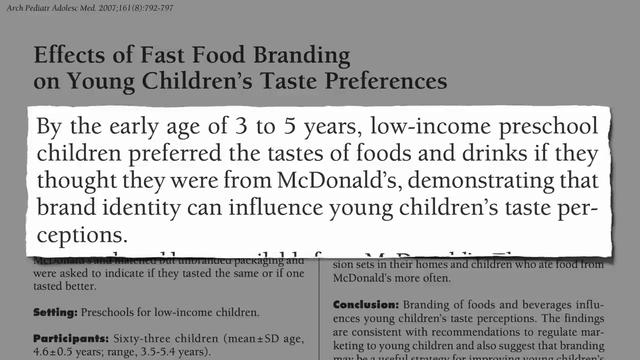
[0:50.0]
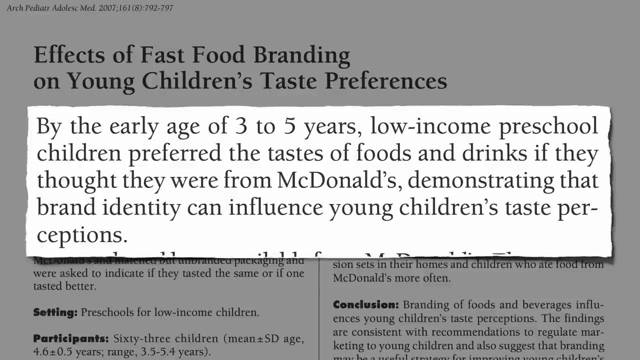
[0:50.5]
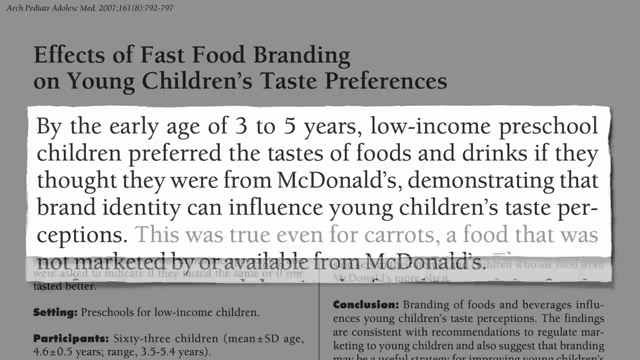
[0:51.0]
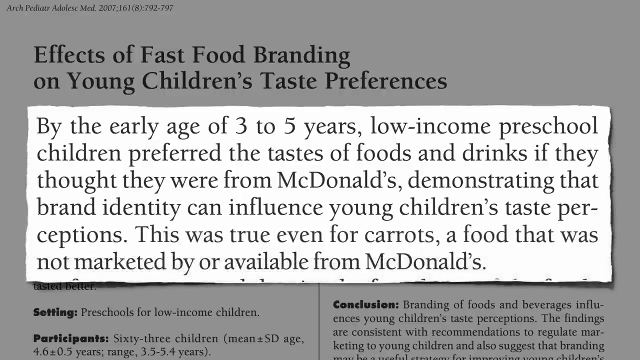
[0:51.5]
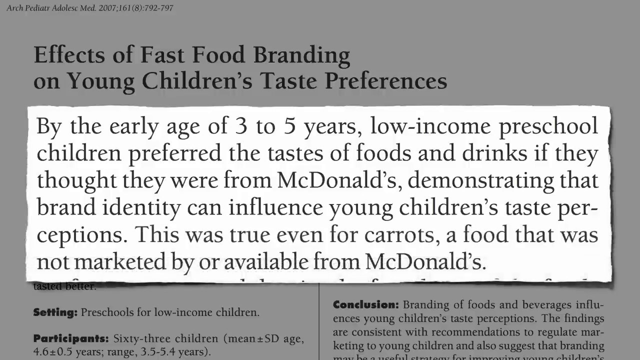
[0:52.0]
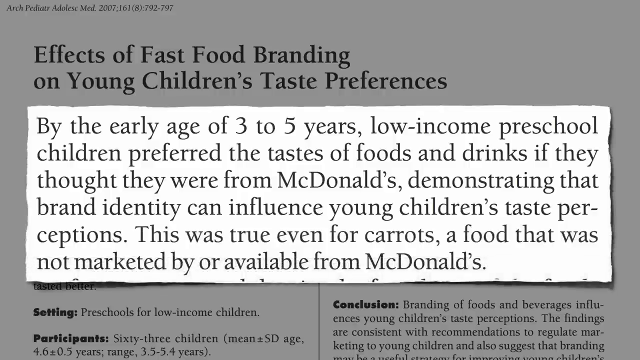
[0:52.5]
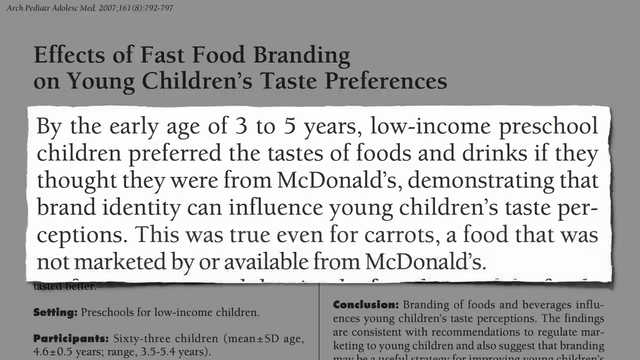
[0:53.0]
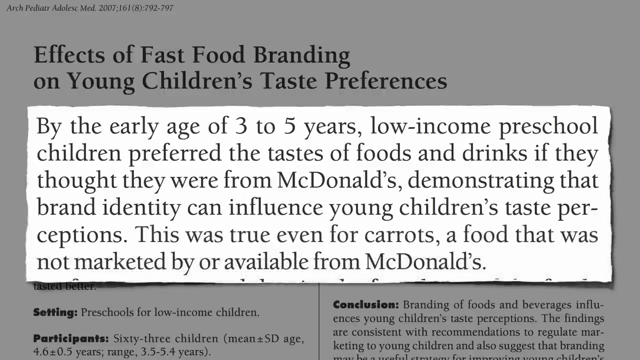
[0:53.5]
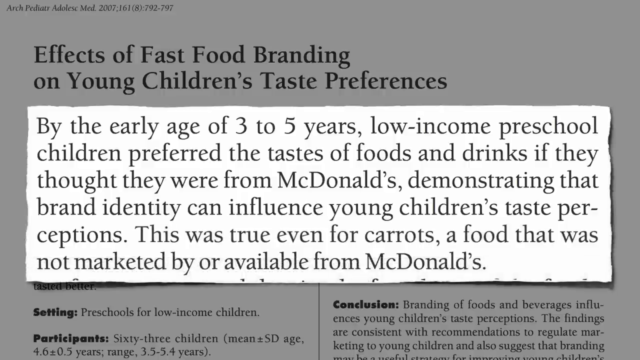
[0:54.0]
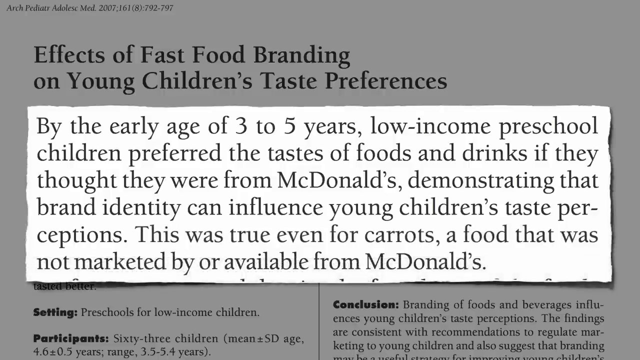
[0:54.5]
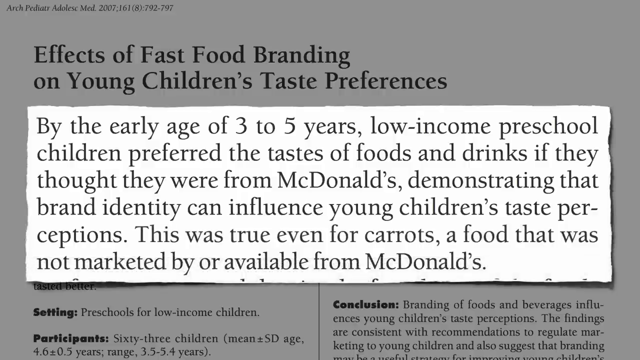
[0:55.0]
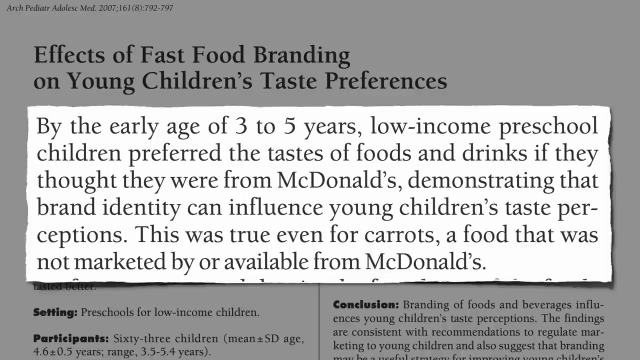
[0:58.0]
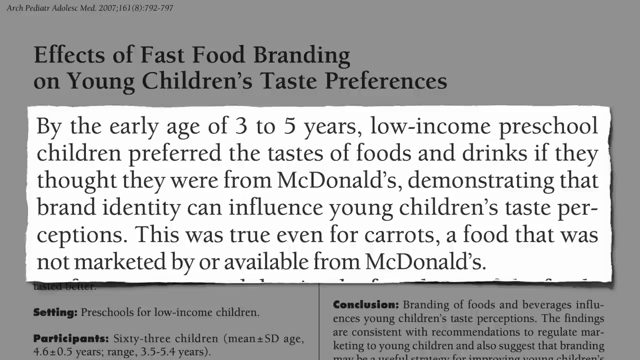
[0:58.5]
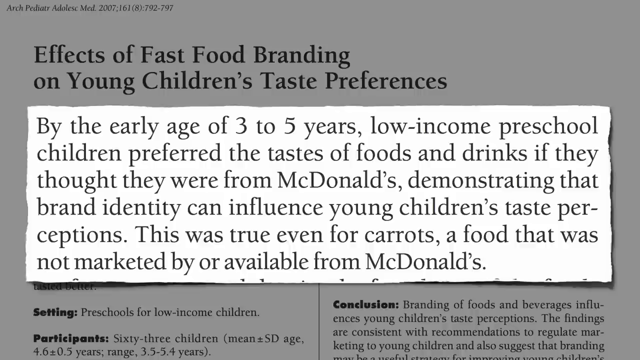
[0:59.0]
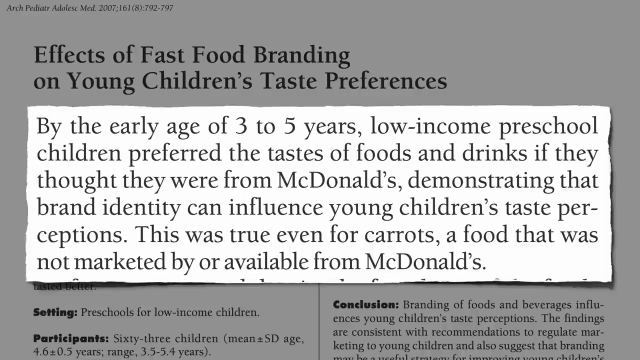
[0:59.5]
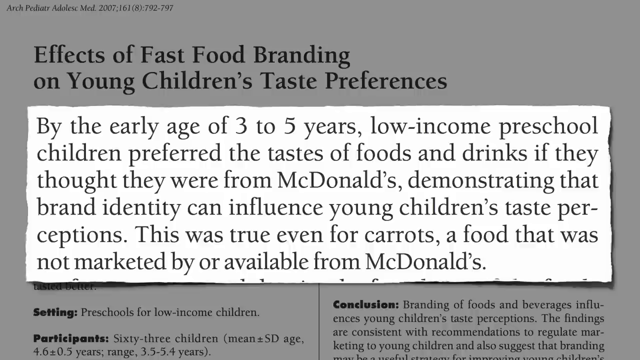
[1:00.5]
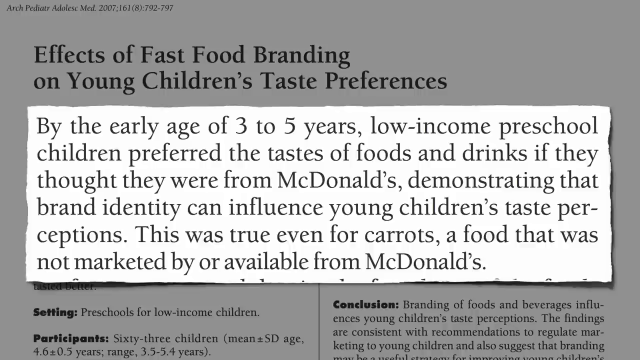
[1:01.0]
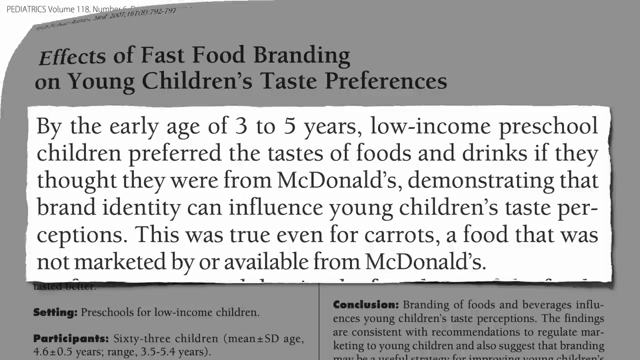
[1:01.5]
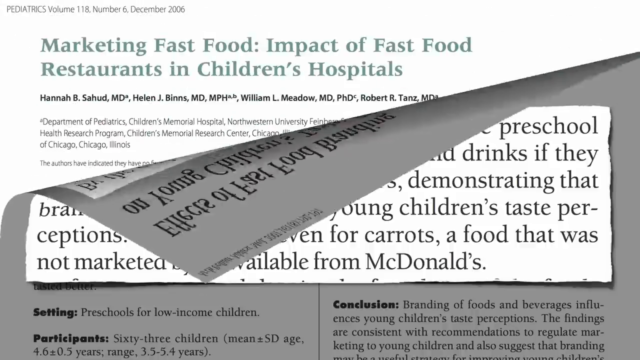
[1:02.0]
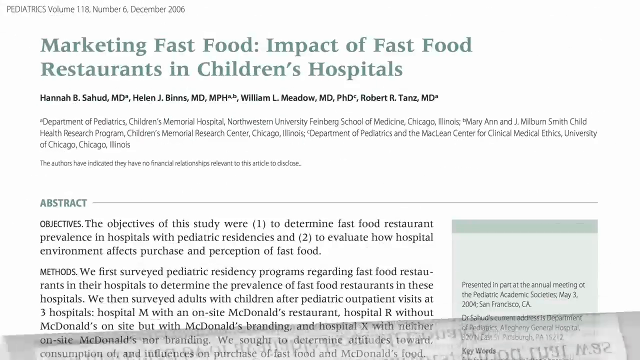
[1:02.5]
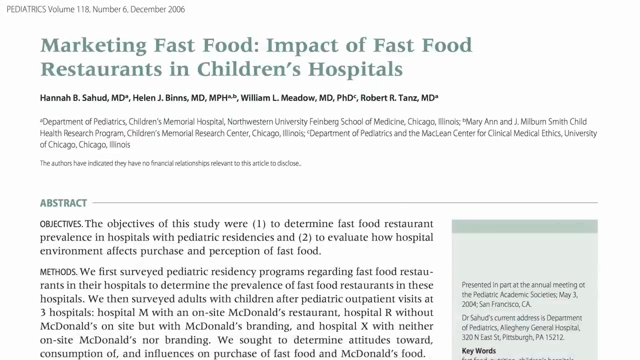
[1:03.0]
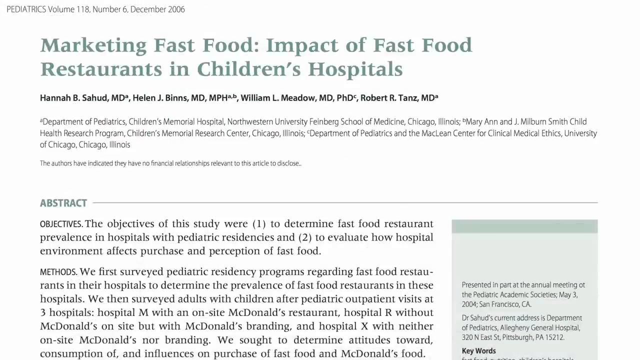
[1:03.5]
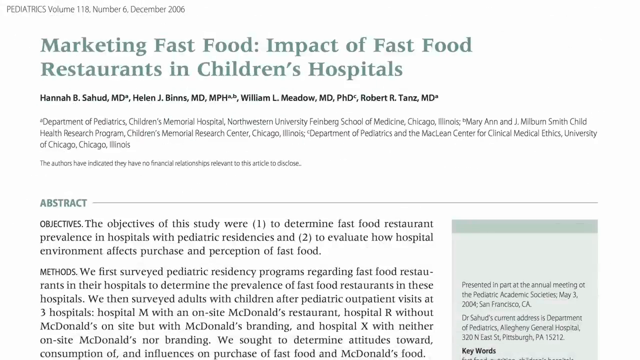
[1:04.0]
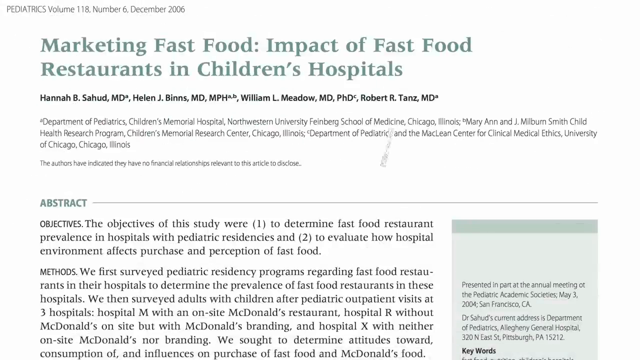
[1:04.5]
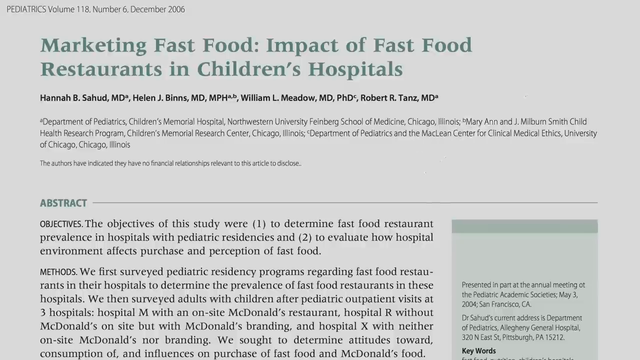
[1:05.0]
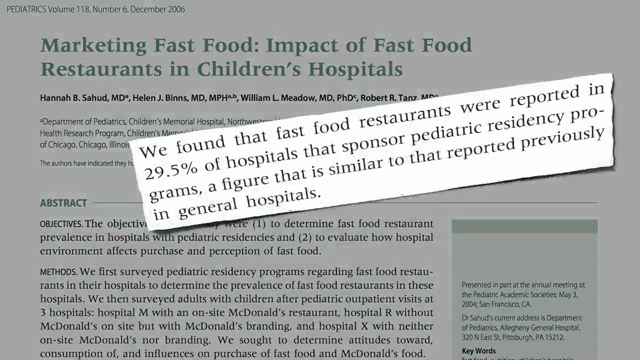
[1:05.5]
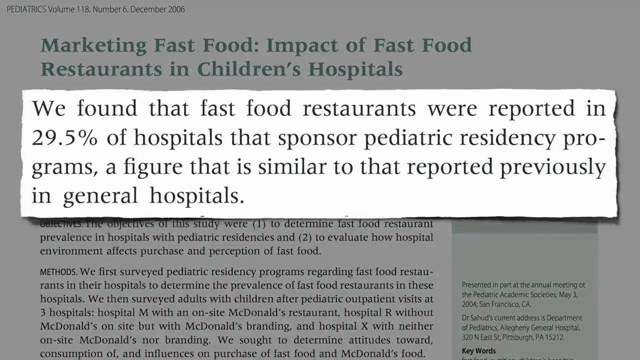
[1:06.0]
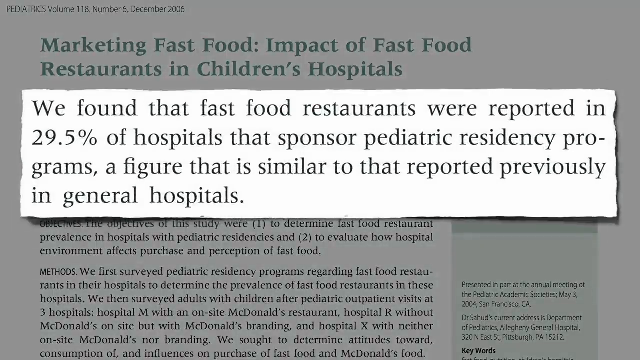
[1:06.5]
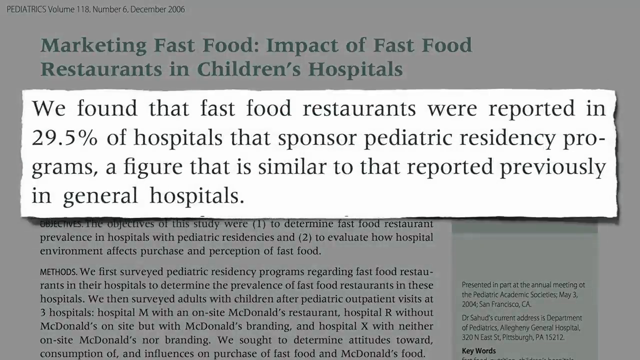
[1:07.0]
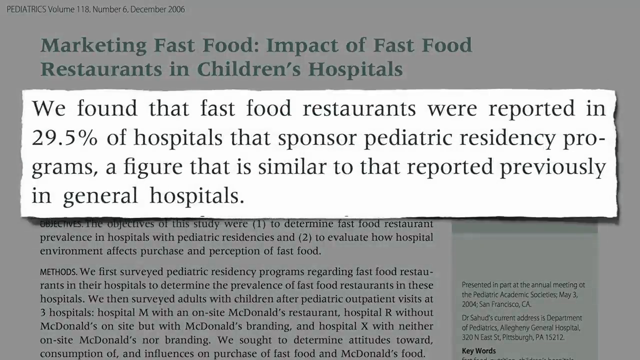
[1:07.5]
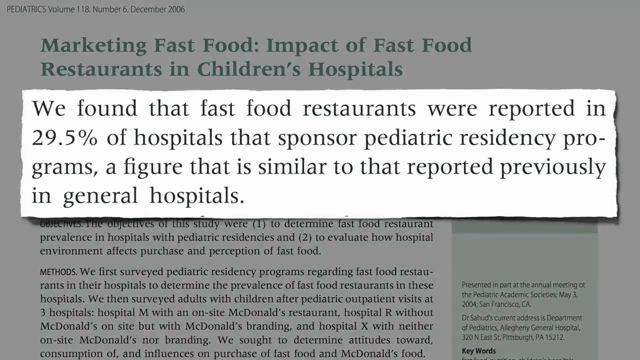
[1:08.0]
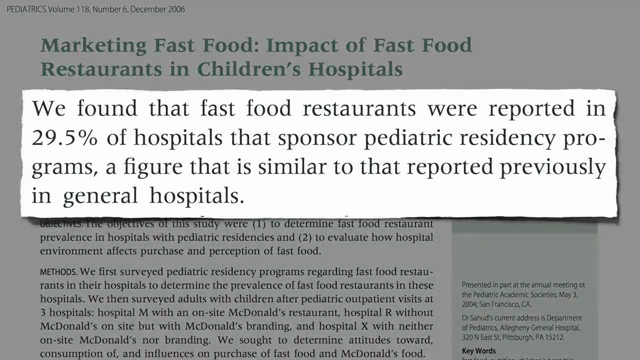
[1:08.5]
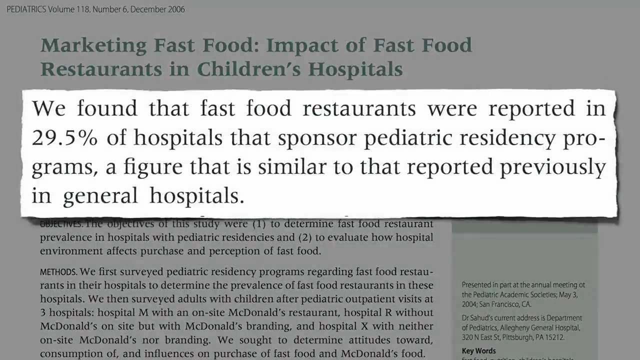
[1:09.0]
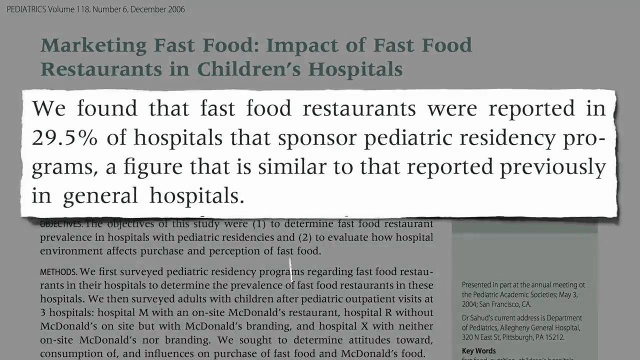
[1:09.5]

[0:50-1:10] The cutout from the article is still on screen, and then the article falls from the left to the right of the screen, falling over on itself and fading out. The background is filled by a new article titled in green print "marketing fast food: impact of fast food restaurants in children's hospitals." A rectangular cutout comes into focus in the center and reads "we found that fast food restaurants were reported in 29.5 percent of hospitals that sponsored pediatric residency programs, a figure that is similar to that reported previously of general hospitals." A new cutout then starts to come into view right under the one in the middle of the screen, but has not fully appeared as this part ends.